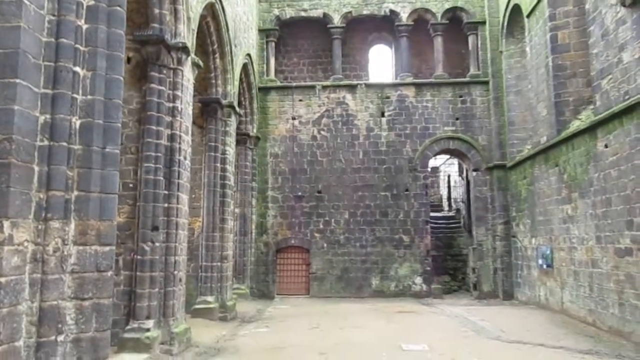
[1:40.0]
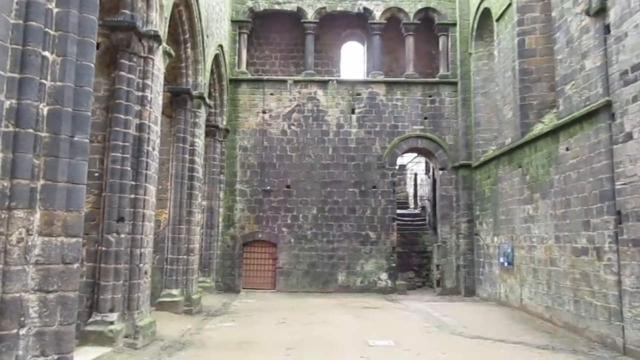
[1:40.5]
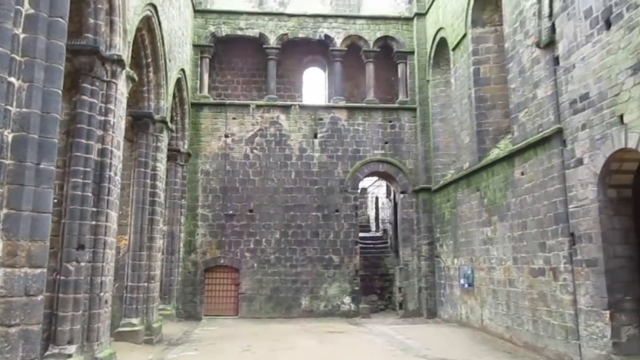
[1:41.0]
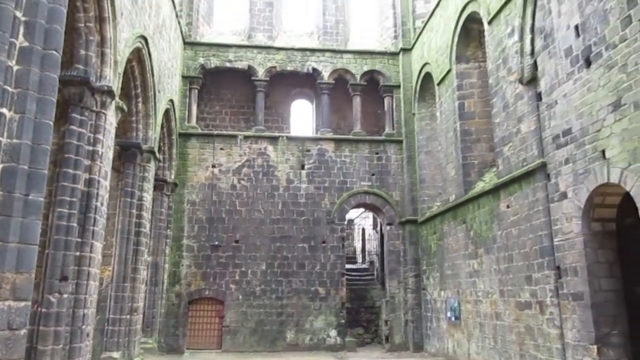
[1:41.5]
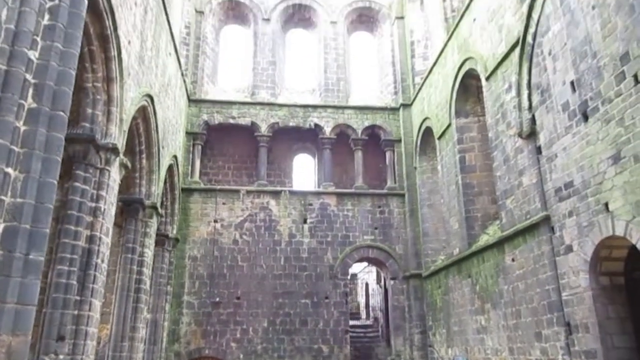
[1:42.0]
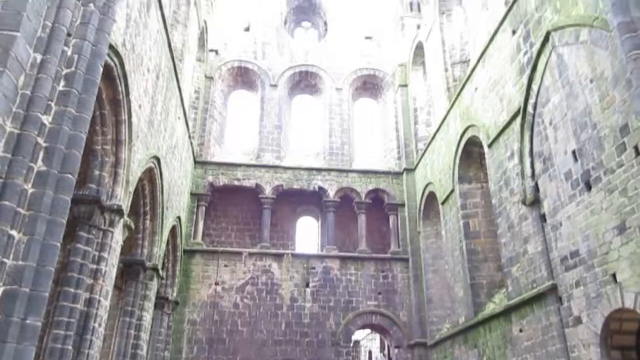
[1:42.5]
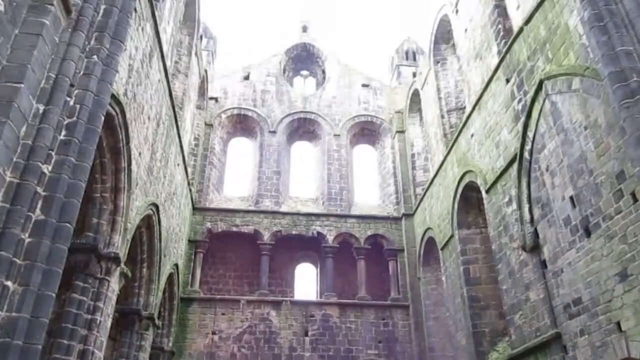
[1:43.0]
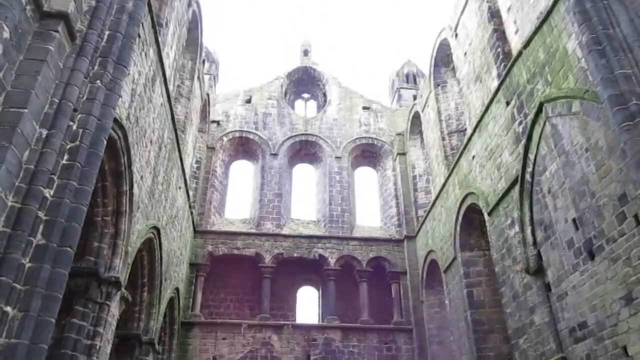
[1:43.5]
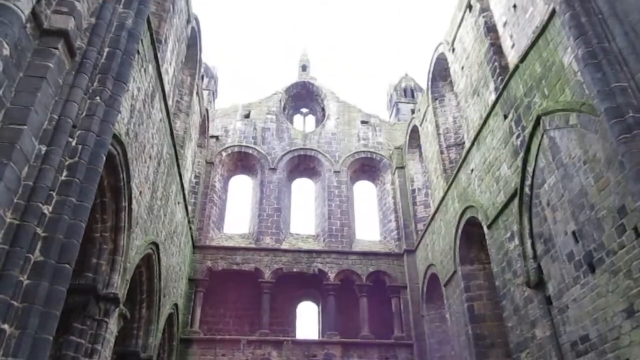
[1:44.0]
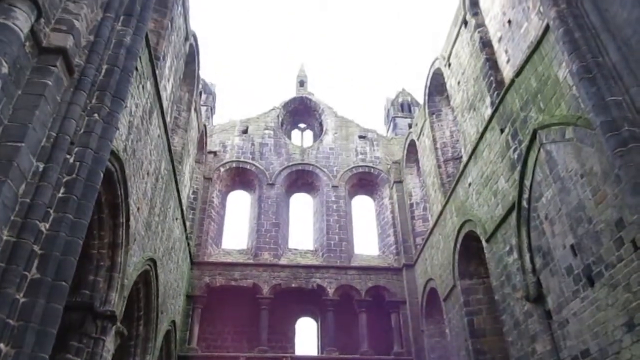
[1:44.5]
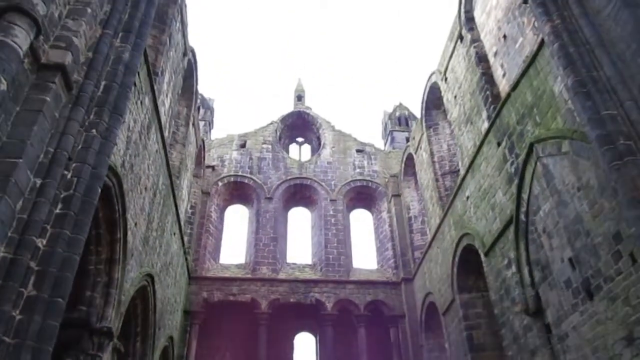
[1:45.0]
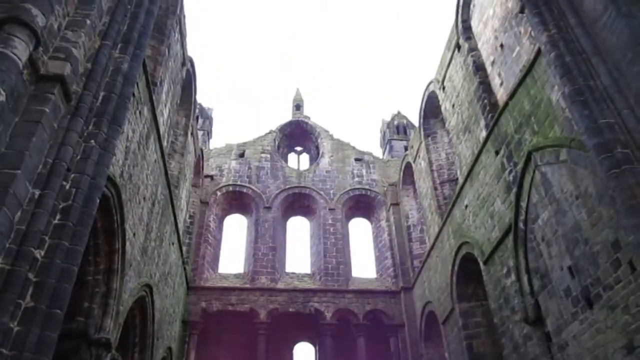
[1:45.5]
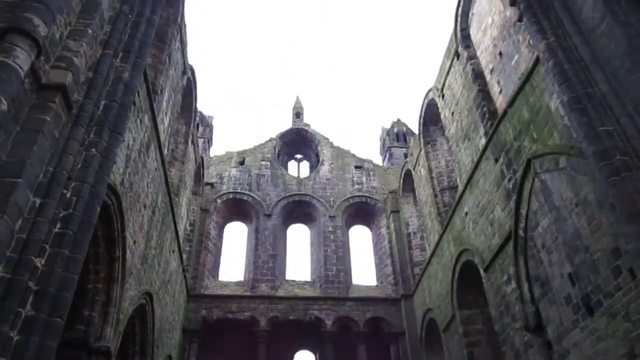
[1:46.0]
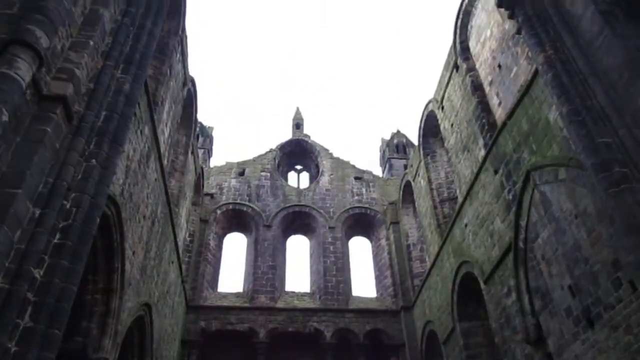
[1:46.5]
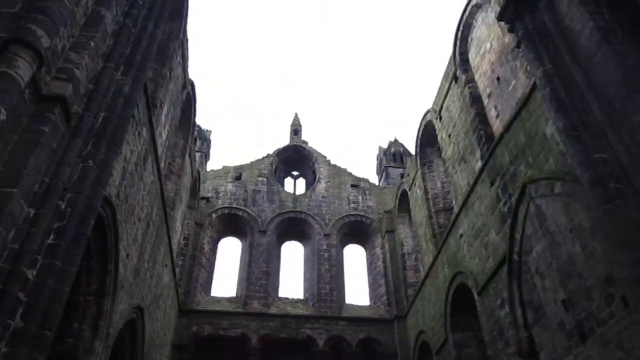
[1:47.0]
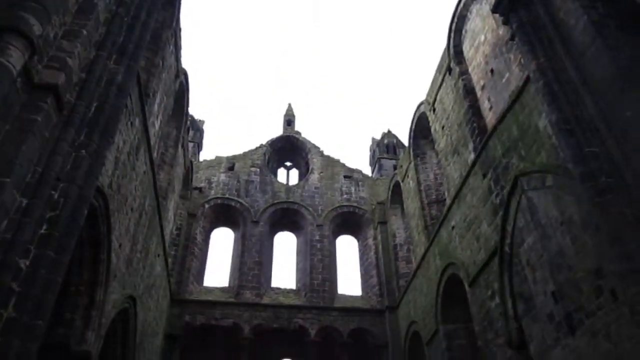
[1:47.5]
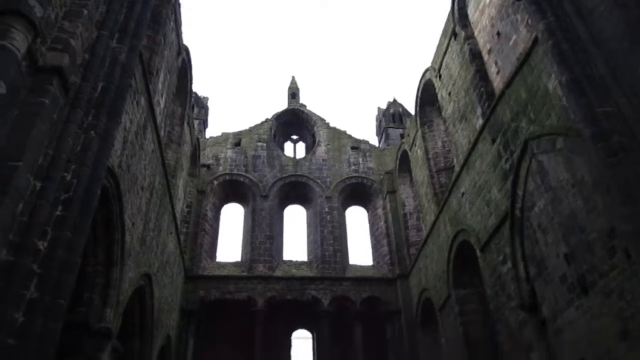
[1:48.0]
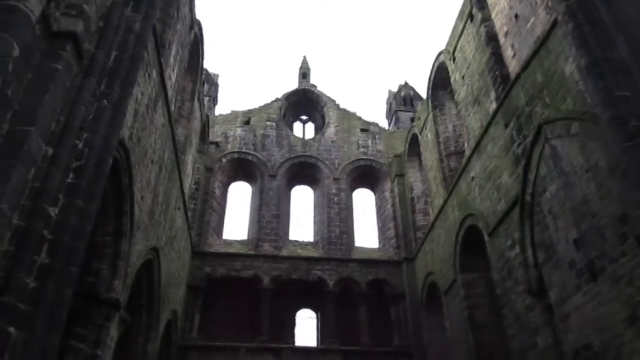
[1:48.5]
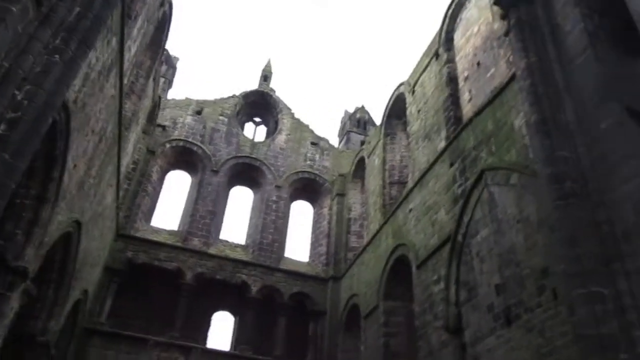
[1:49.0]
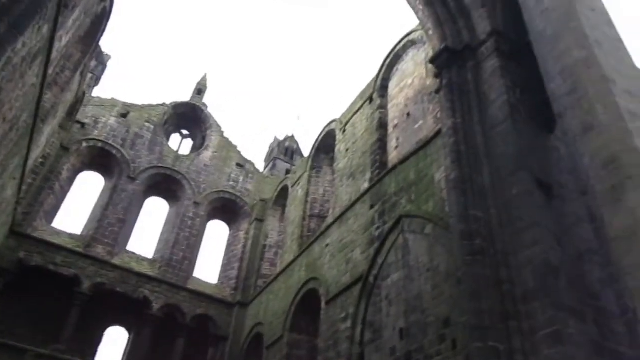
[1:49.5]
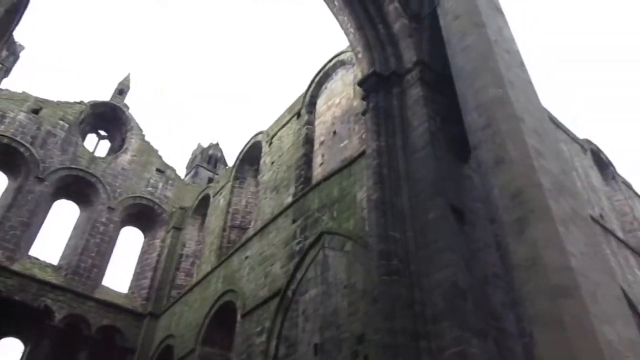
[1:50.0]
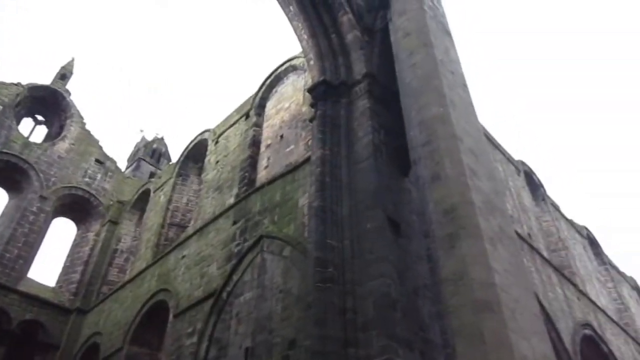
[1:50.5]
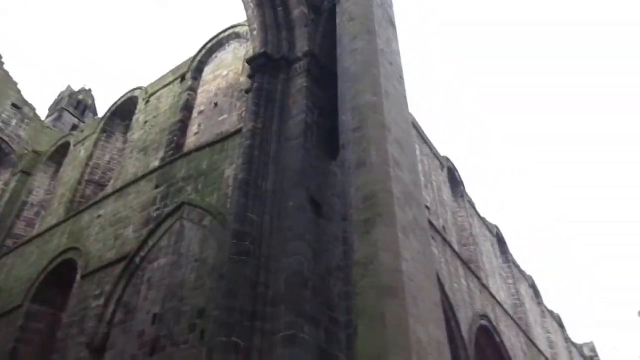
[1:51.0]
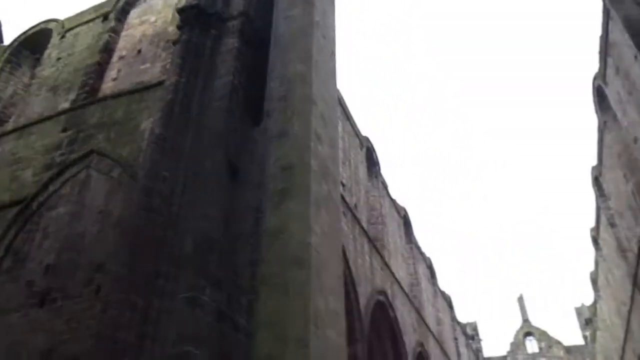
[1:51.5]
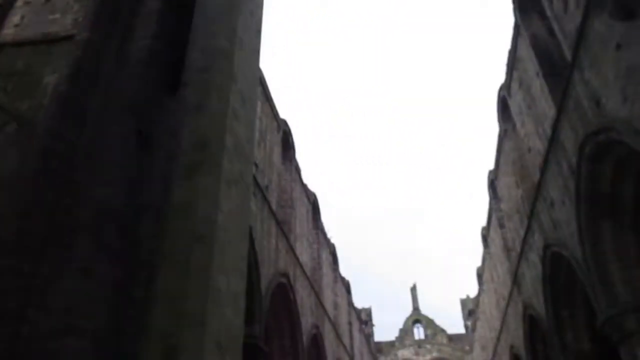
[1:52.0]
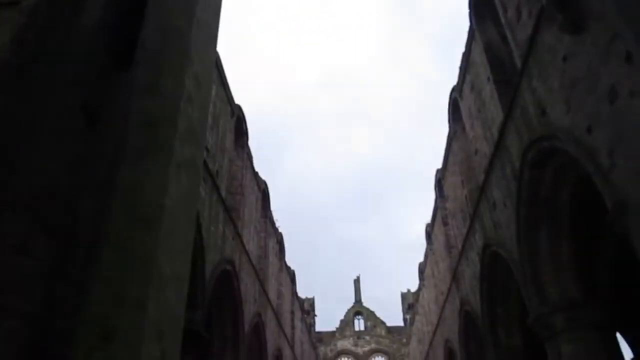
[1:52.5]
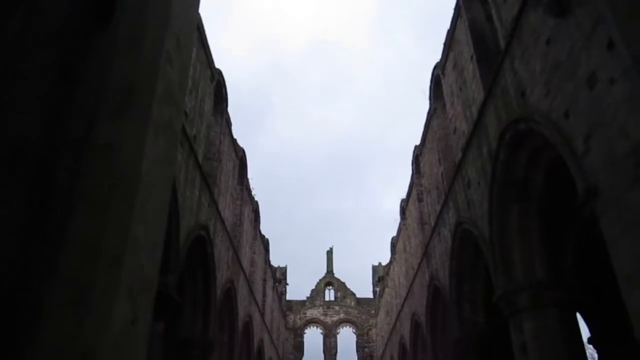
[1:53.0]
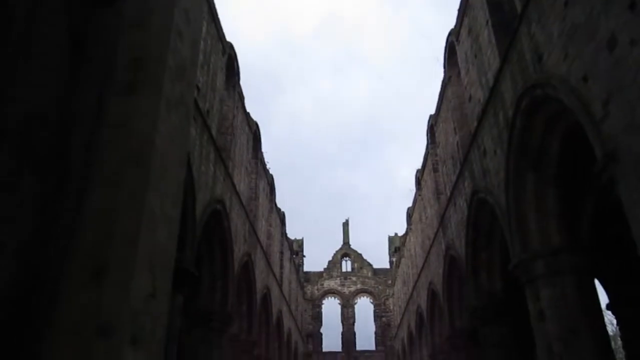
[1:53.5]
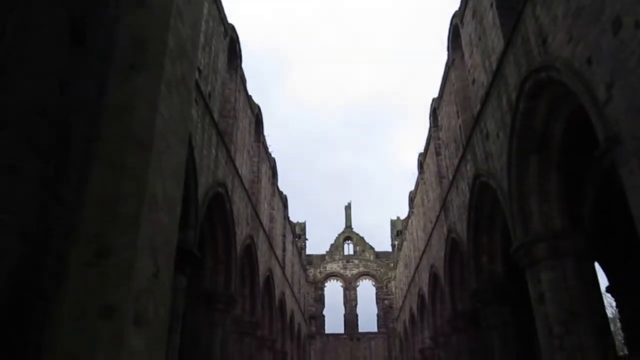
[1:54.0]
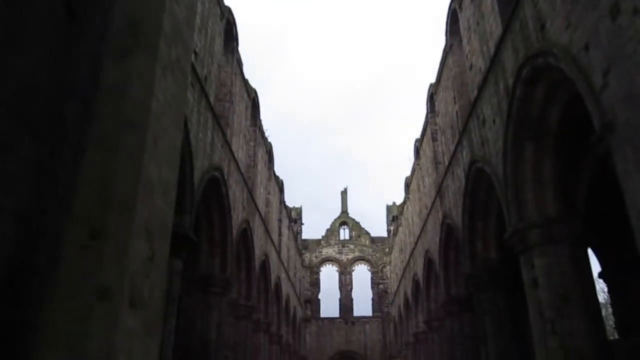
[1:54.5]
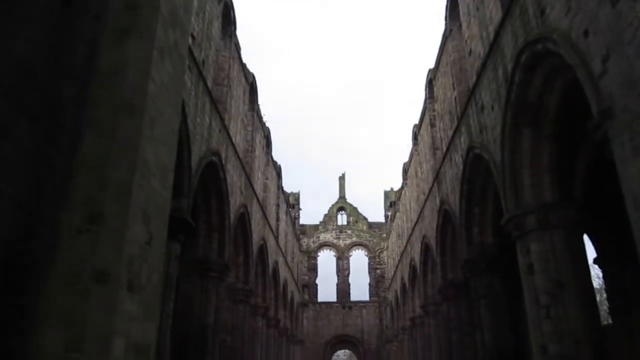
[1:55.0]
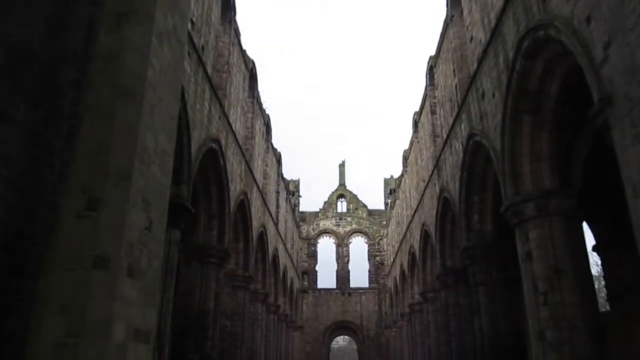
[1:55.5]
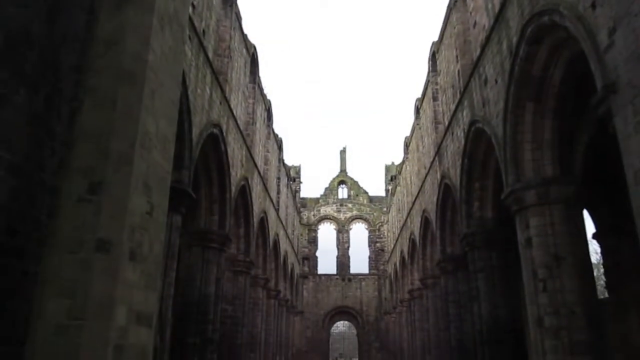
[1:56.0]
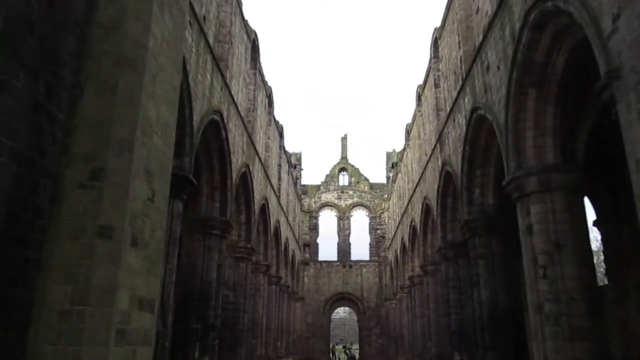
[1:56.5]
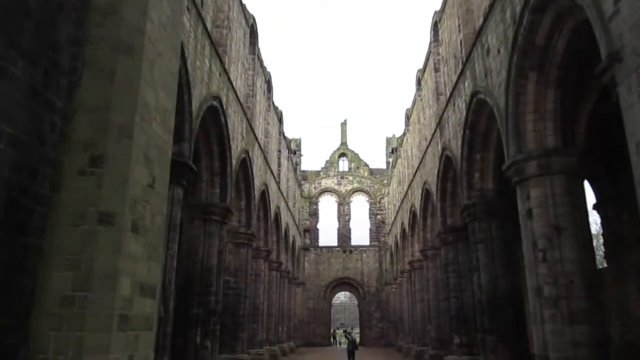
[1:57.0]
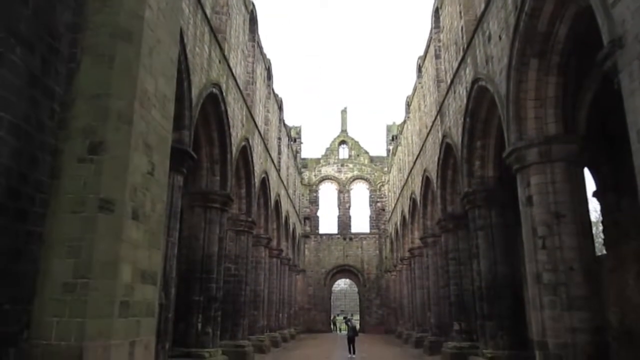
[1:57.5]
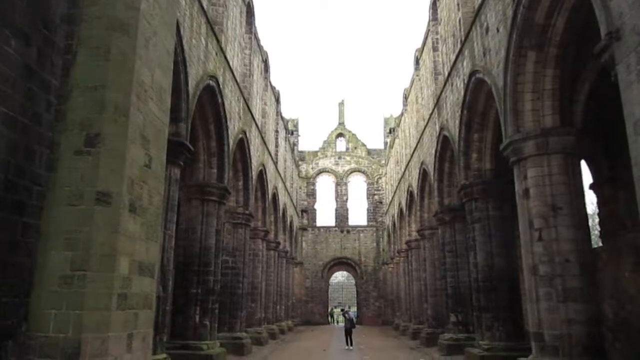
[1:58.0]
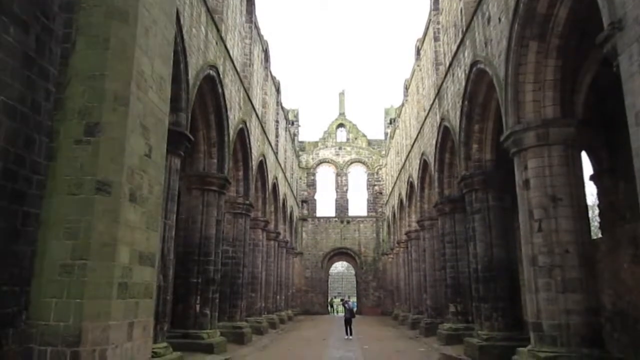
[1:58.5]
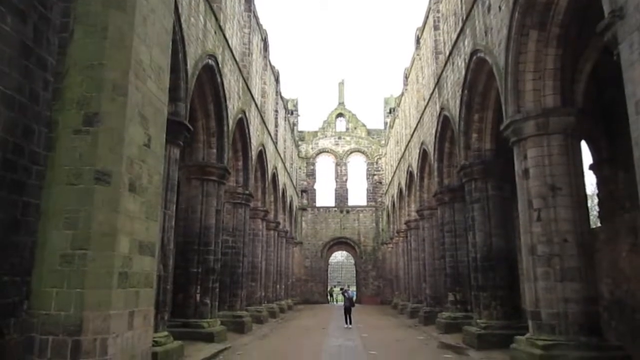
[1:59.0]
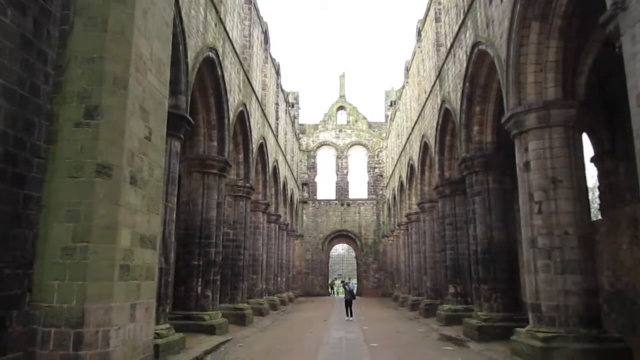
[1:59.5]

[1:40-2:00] The hallway to the right has archways on the left side and a more solid wall on the right side, with what appear to be arched windows overhead. The far wall has a very tall arched doorway on the right side that appears to lead to a stairway. Another much smaller doorway on the right side appears to be covered with some sort of grate or door. Above is a raised platform with multiple archways, smaller on the right side and larger on the left, and a single arched opening in the center of this raised area leads outside, with light streaming in. The camera pans upward and shows three arches with a double arched window similar to the one on the left side, and three spires extending upward. The camera lingers on this for a moment as the lens adjusts to the light in the sky, then pans to the right to show the sky above the central hallway. It then pans down very slowly to show a few people standing on the ground there.